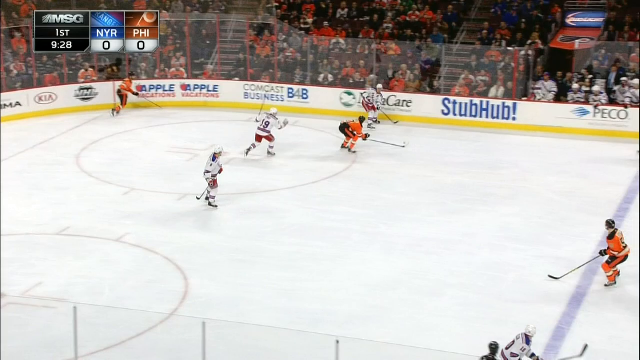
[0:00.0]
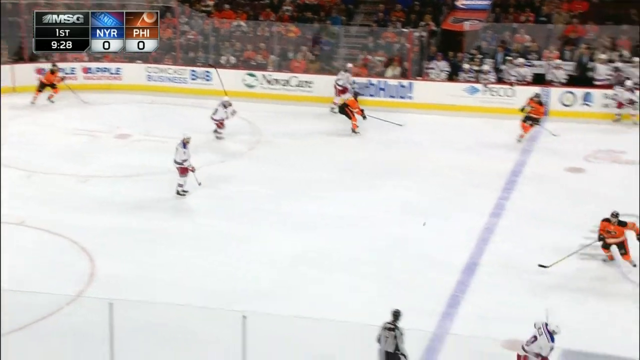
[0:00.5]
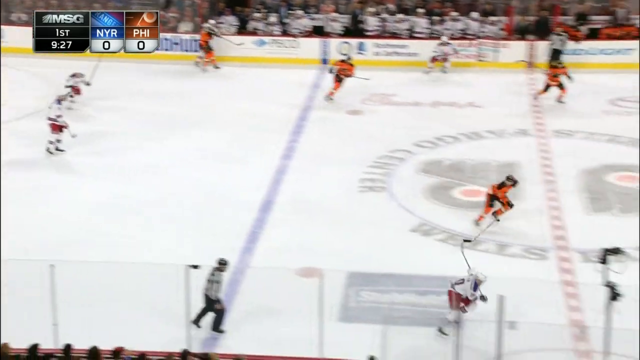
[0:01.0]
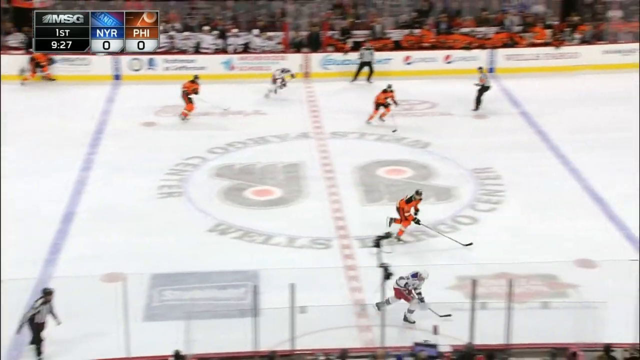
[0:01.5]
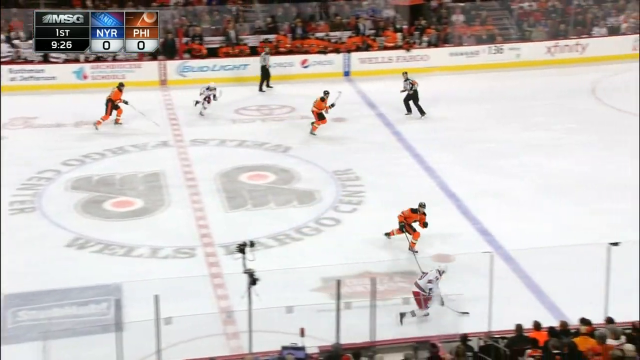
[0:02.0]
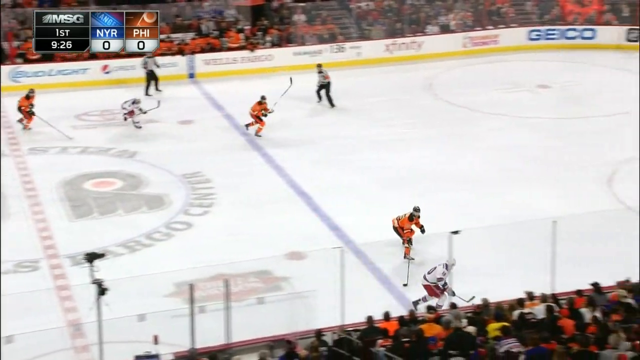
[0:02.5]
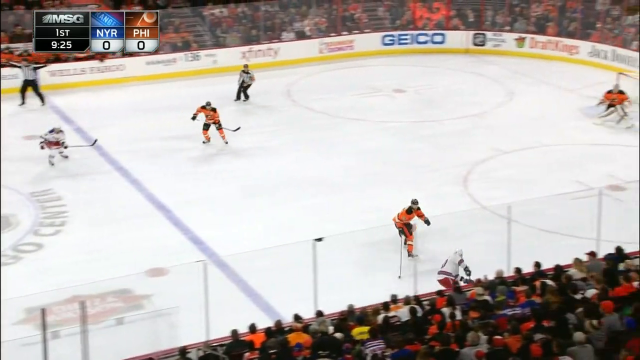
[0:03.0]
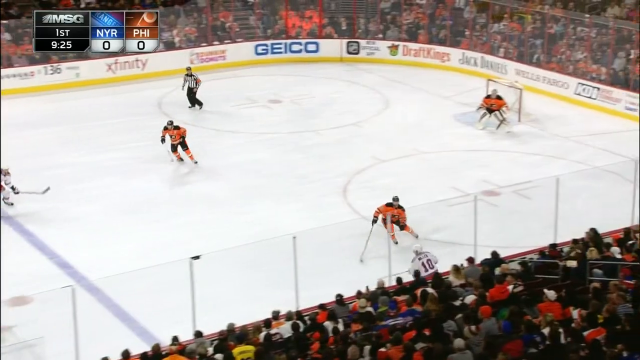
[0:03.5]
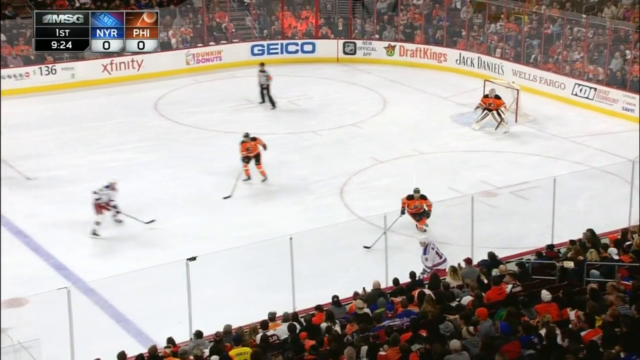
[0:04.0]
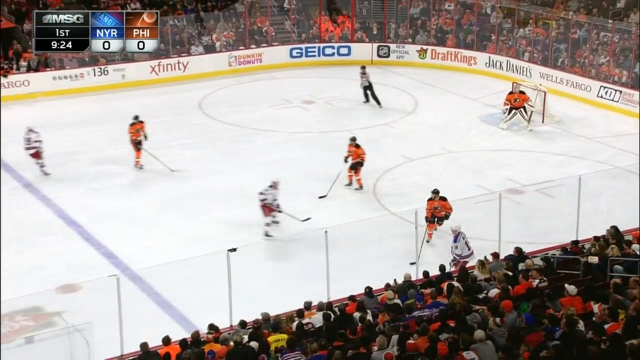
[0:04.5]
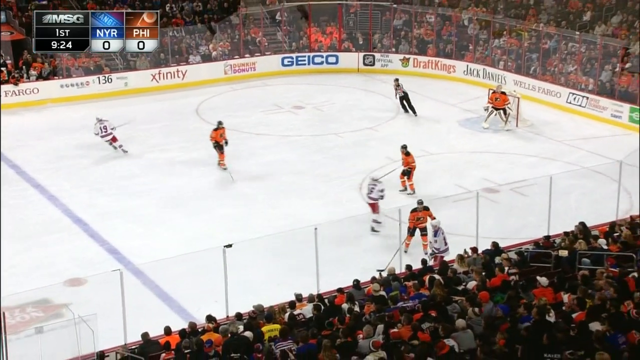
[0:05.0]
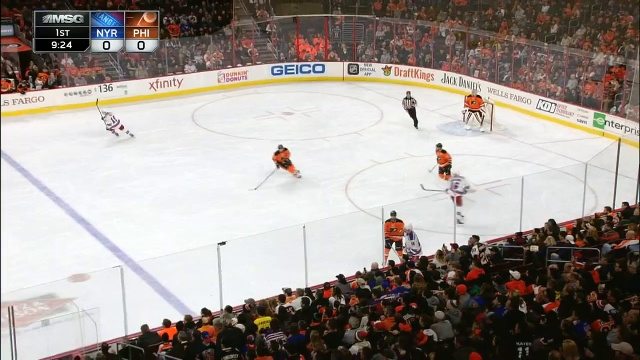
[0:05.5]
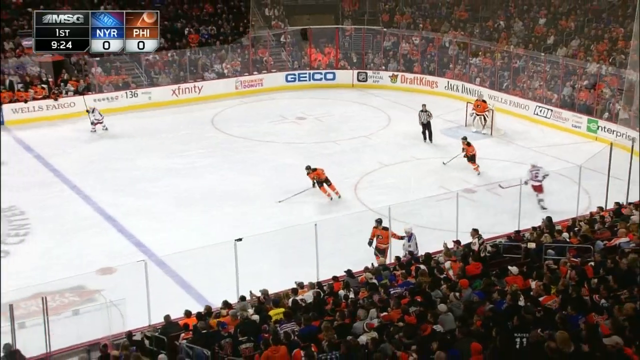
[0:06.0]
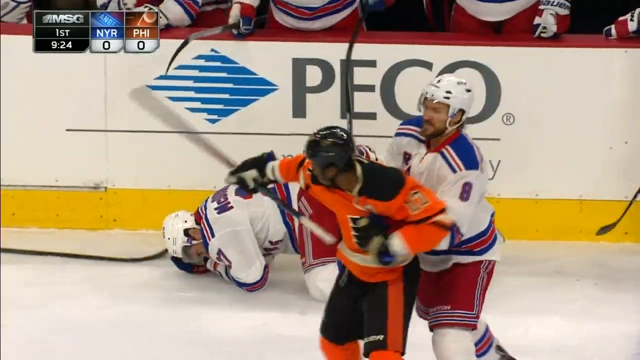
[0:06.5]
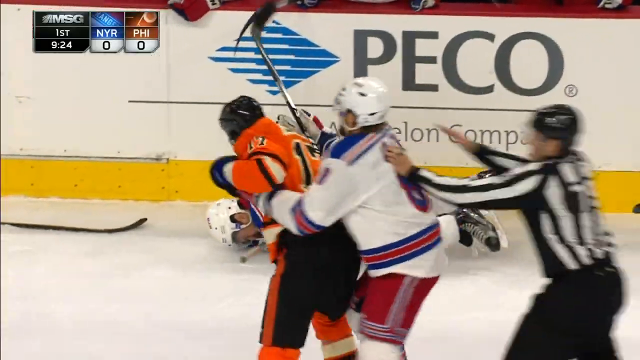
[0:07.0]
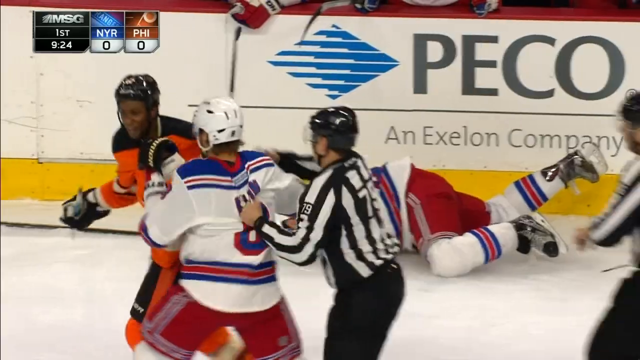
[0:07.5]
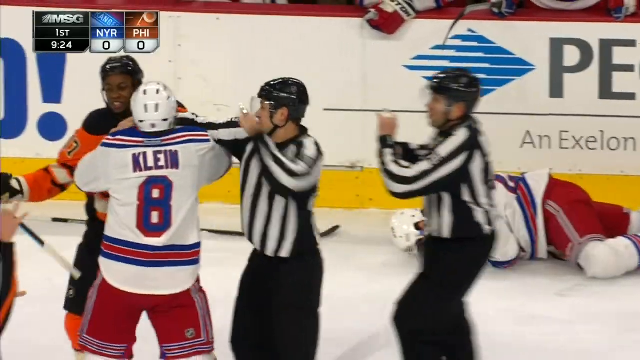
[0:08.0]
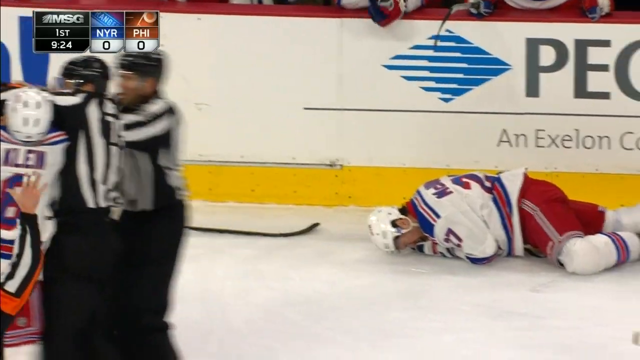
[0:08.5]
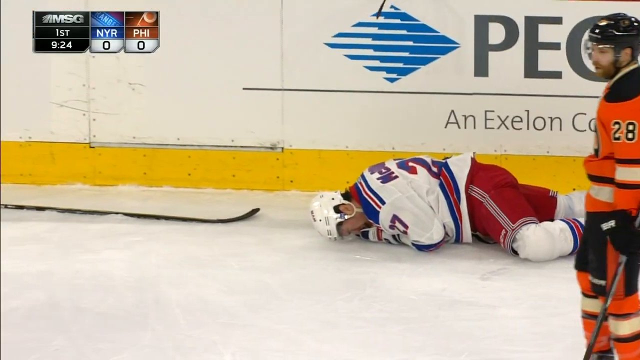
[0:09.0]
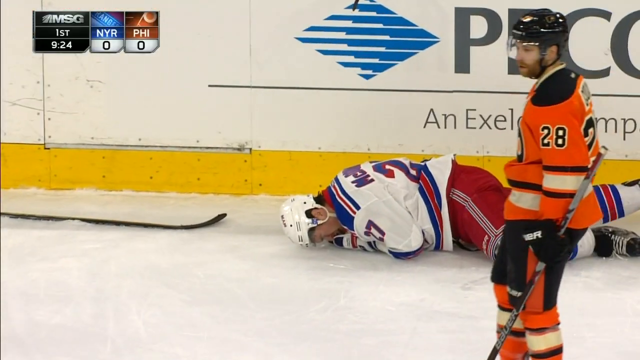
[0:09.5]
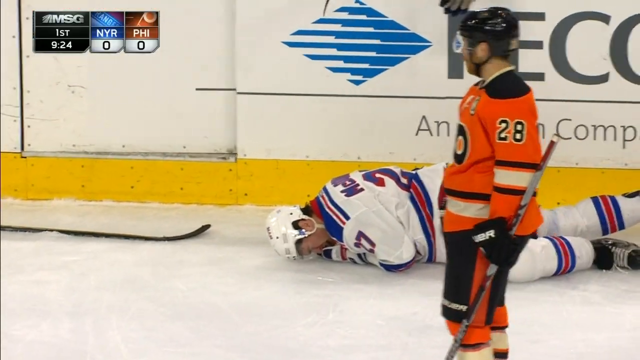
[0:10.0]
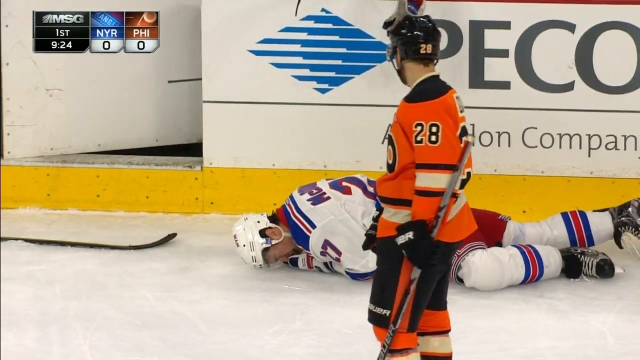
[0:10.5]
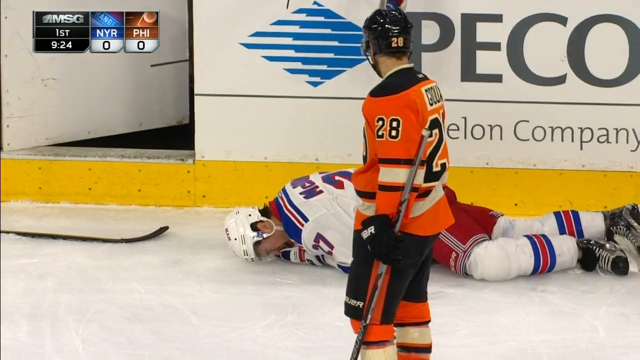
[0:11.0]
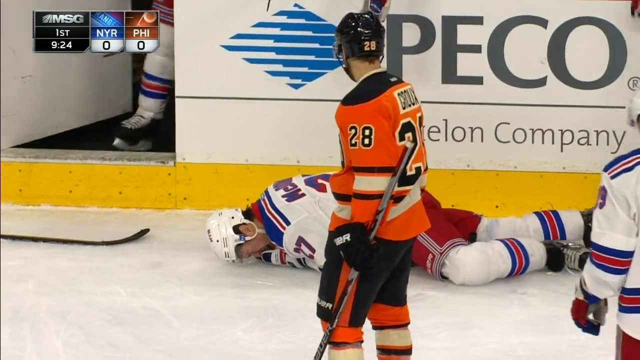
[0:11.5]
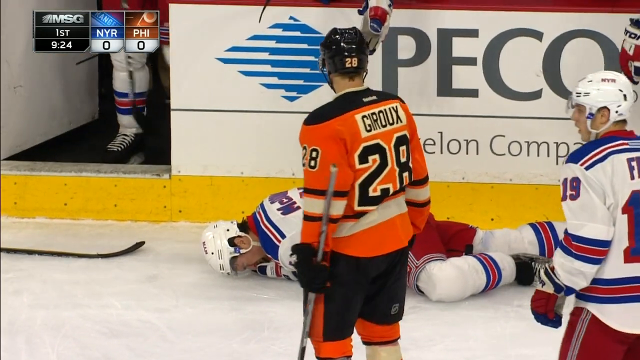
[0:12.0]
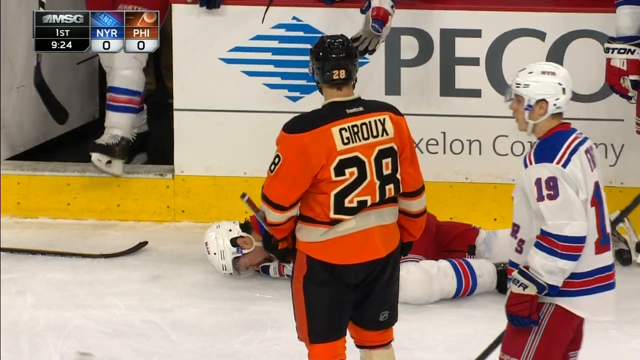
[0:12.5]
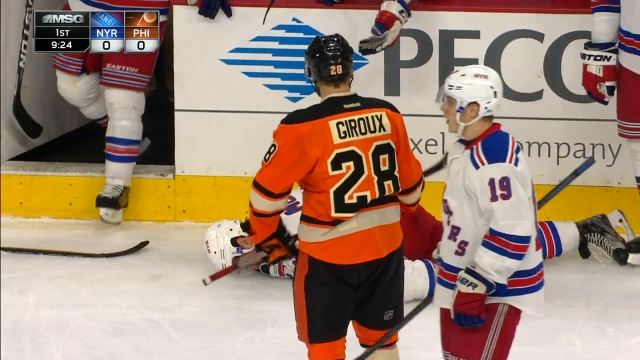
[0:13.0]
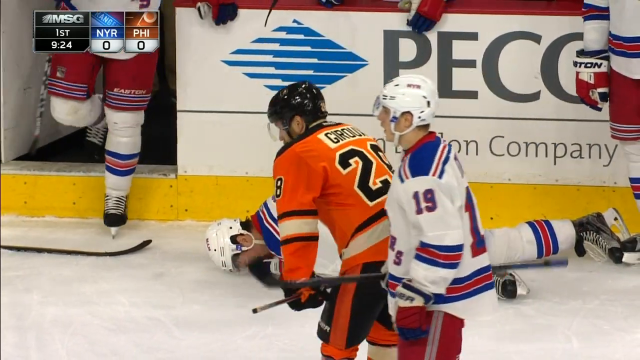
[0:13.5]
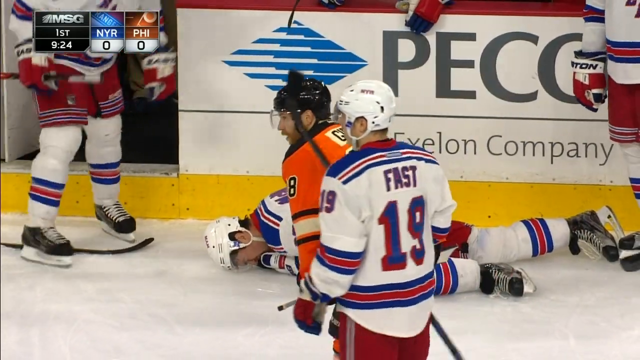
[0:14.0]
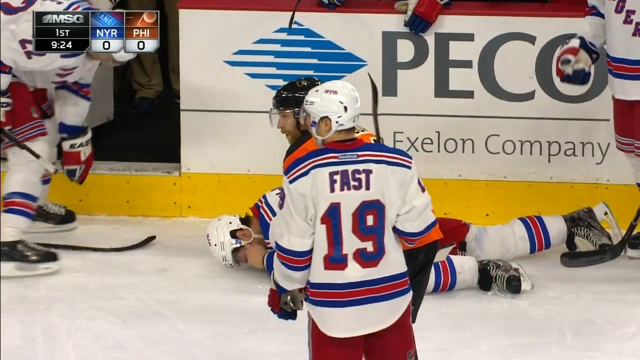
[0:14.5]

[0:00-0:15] The video, titled Gotta See It, Simmond Ejected, opens on a hockey game with players heading down the ice toward the goal. A fight breaks out between the two teams, one in orange and black uniforms and the other in blue, white and red uniforms. As the fight breaks out, the referees come over and try to break it up. Another player comes in, possibly to relieve a different player. Simmond appears to be one of those involved in the fight. One of the players is down and hurt on the ice; how he was hurt is not clear, though it looks like Simmond might have checked him. A member of the other team gets in Simmond's face, wanting to fight him, but this happens off camera and is not shown.